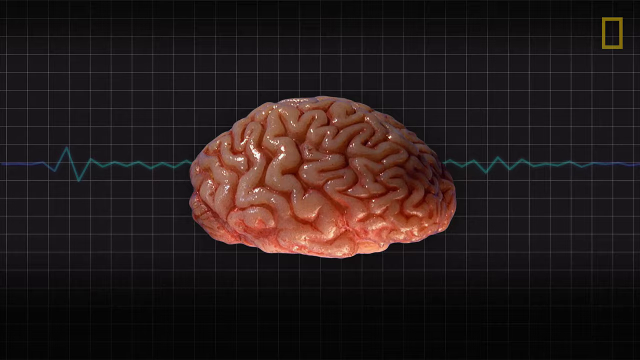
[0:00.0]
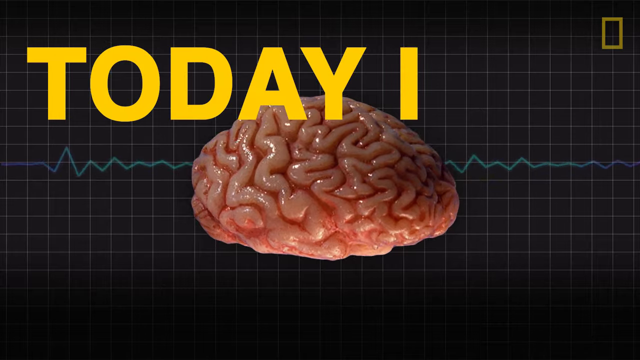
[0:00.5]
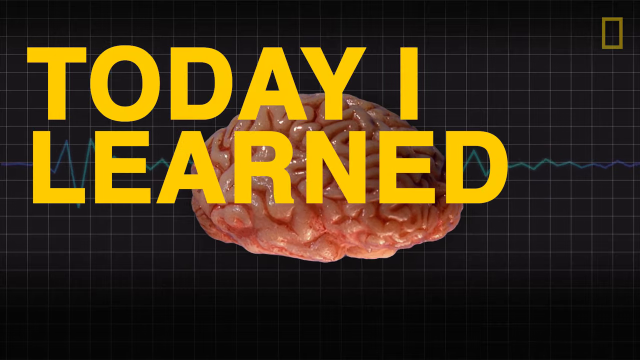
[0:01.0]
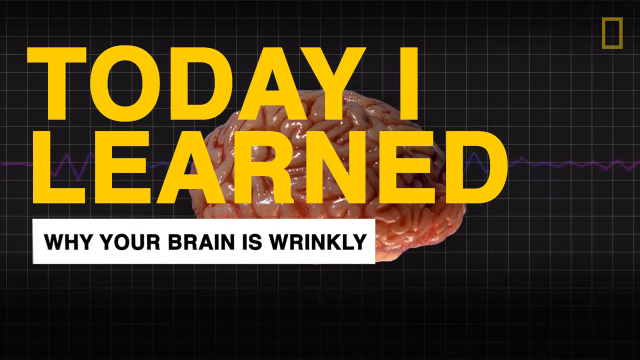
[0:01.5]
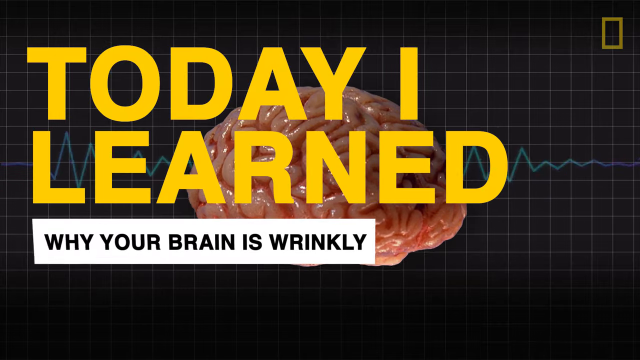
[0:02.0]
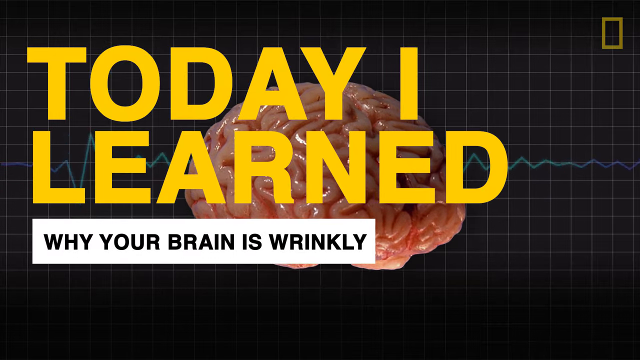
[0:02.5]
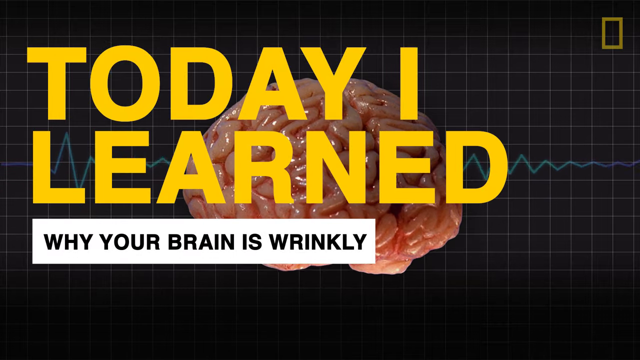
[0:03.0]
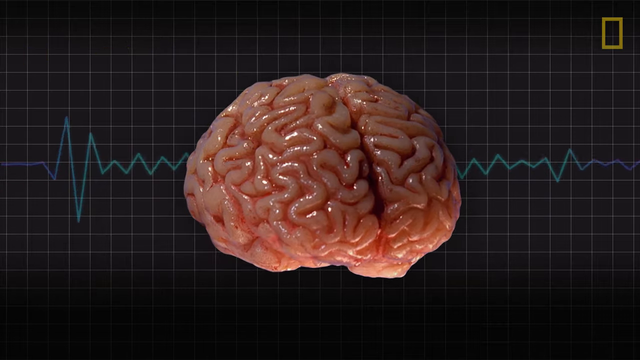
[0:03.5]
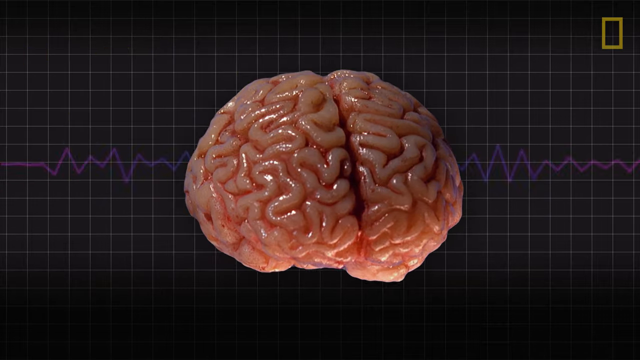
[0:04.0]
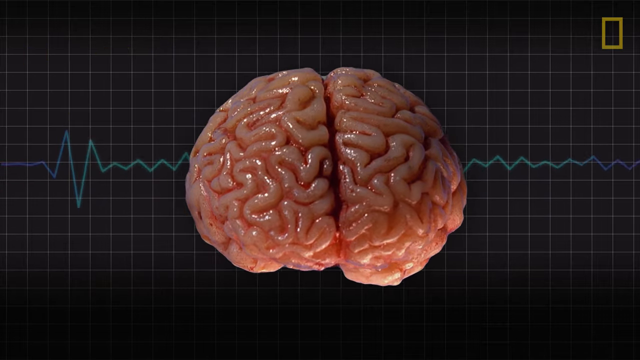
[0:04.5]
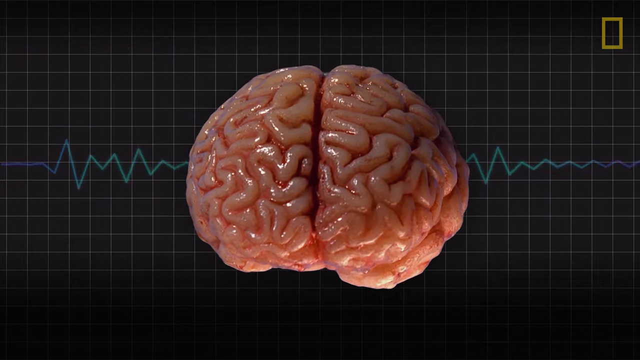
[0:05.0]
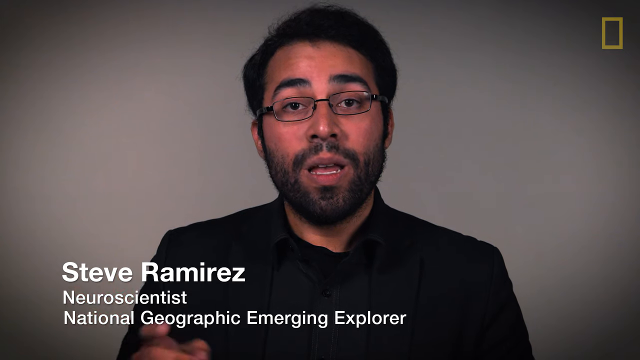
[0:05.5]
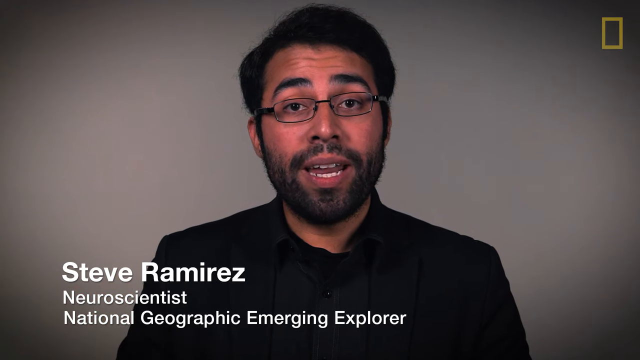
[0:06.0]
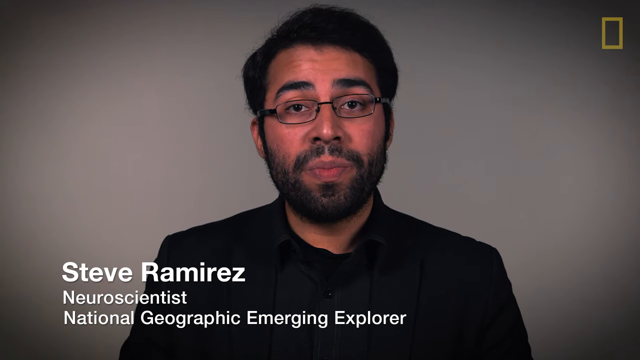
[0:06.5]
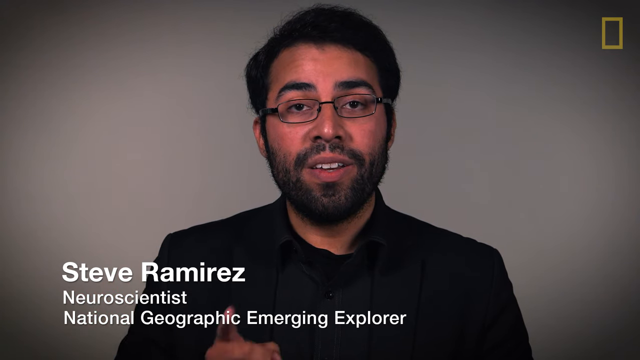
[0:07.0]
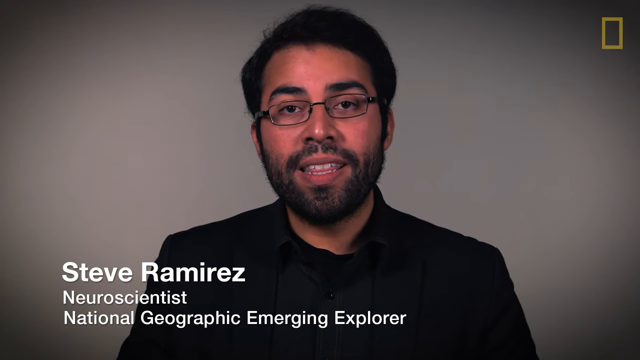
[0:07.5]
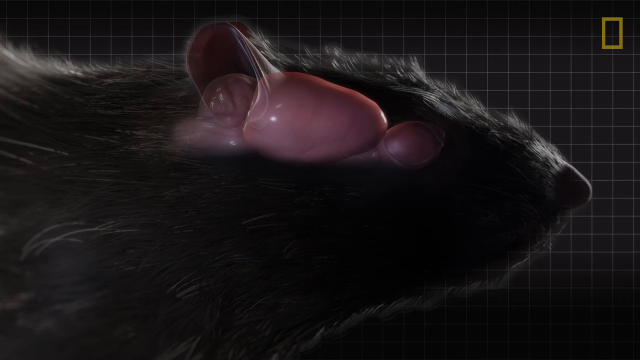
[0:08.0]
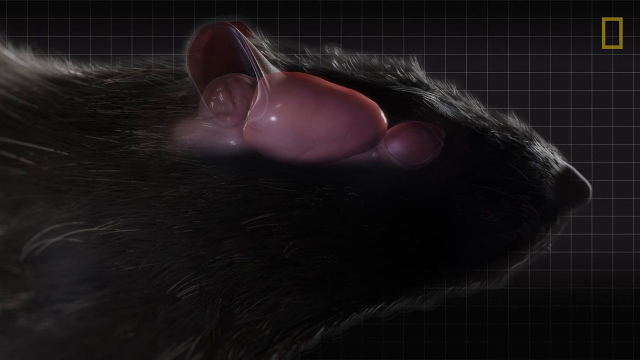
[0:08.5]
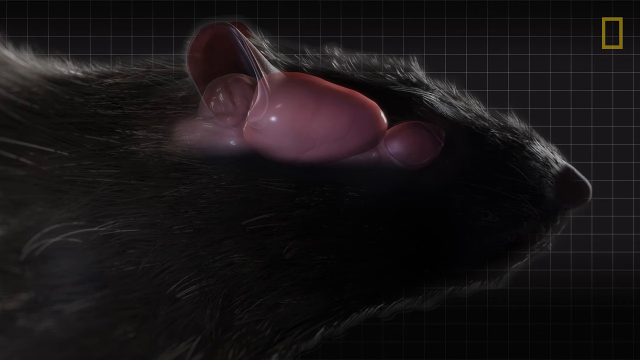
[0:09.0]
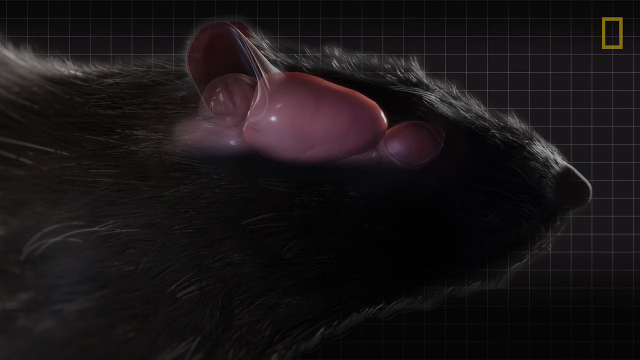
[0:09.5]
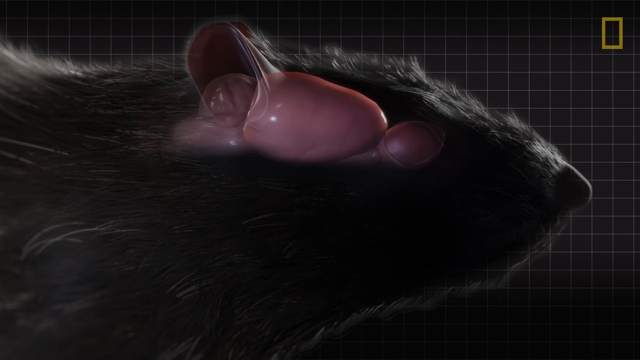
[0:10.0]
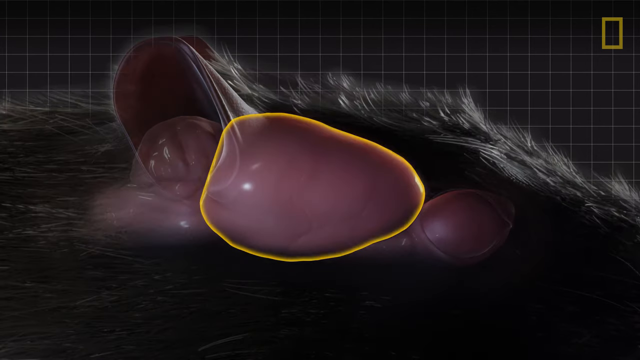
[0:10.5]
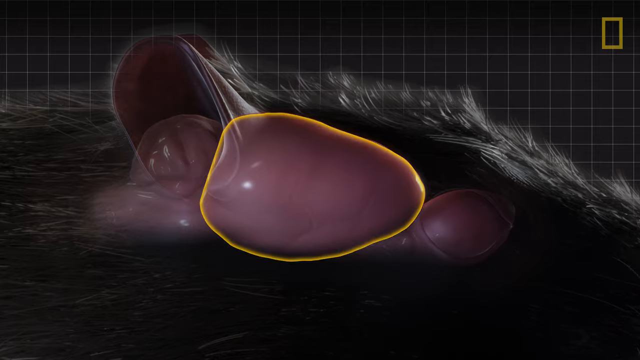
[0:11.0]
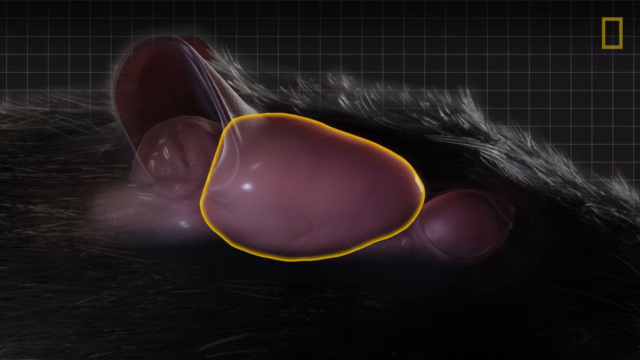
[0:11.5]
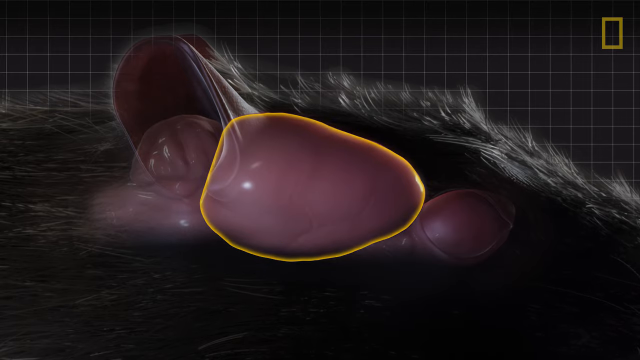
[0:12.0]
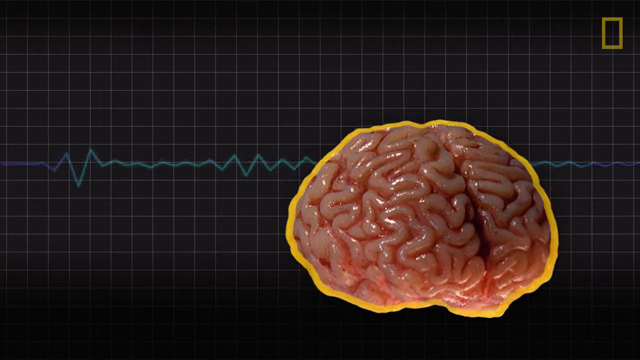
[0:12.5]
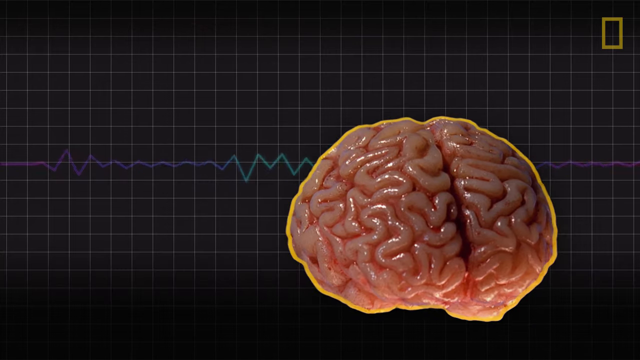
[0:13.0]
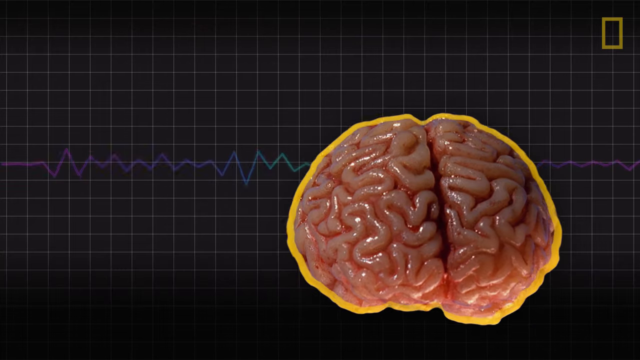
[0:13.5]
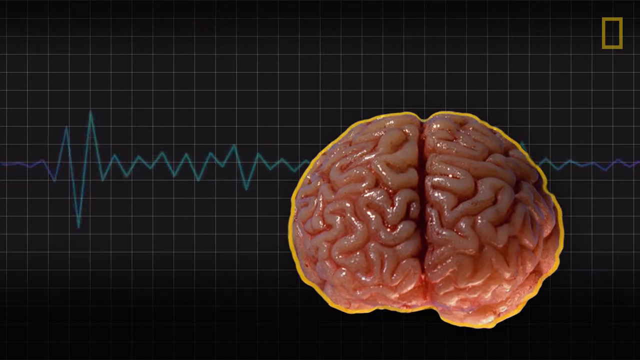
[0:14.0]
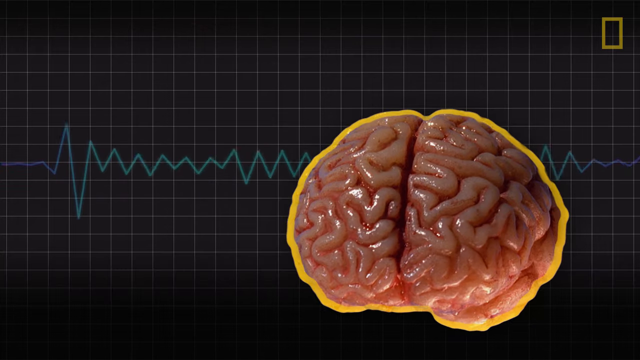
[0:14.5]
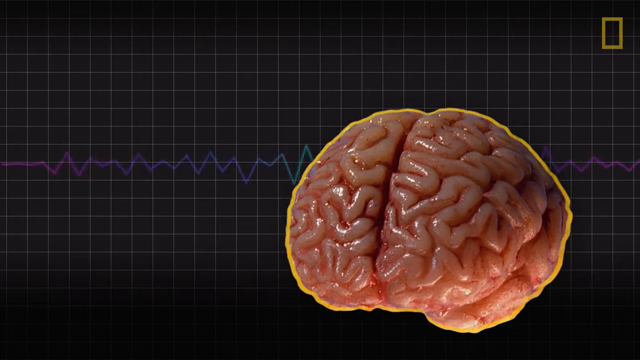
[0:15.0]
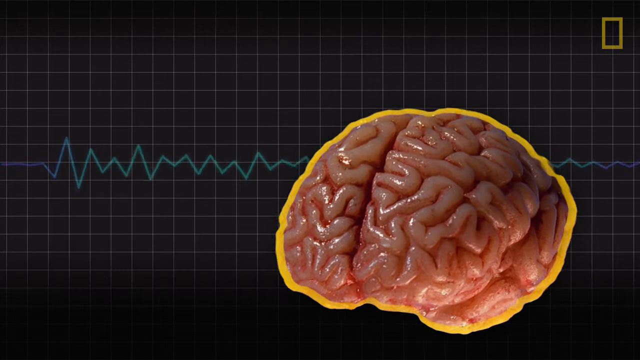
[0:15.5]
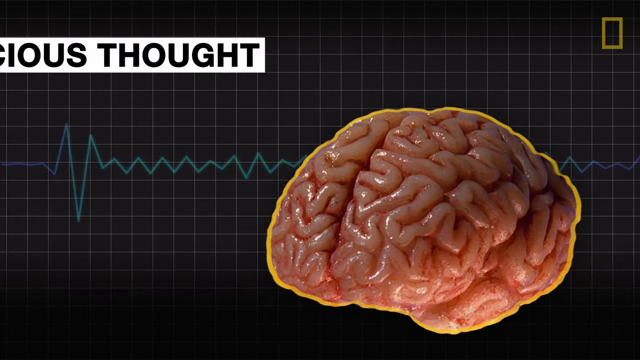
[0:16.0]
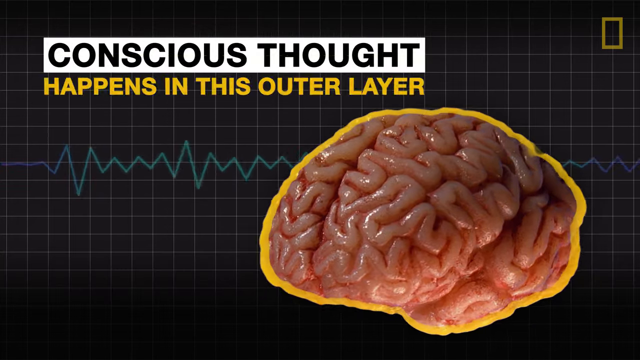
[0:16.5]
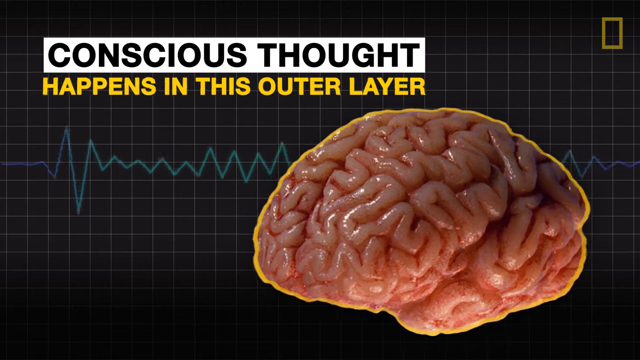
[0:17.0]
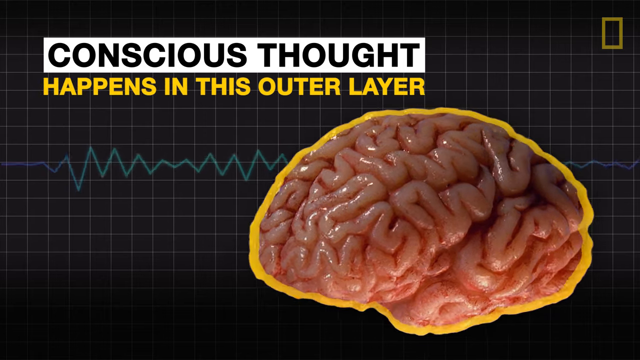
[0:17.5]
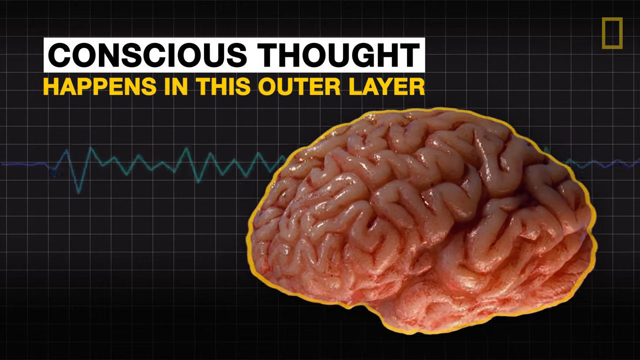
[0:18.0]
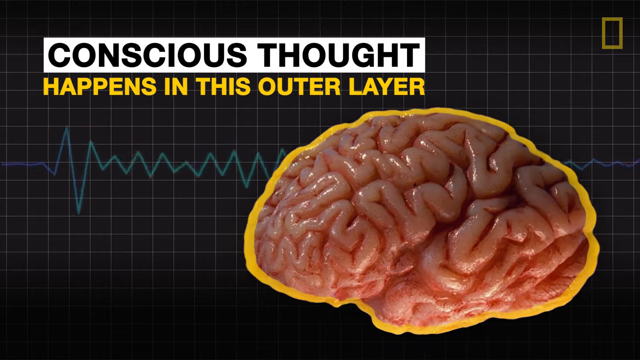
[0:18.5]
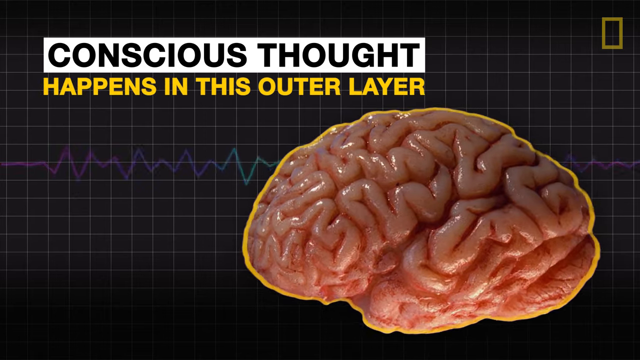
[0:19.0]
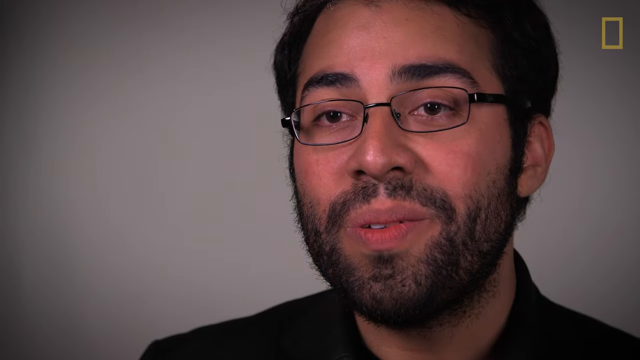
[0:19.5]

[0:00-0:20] On a black background, a very shiny, slimy-looking brain rotates. Over it, large yellow all-caps sans-serif text reads "today I learned," and beneath that a white text box with black all-caps text says "why your brain is wrinkly." In the background there is a kind of gray grid pattern with a small blue, kind of heartbeat-style line moving up and down. After this brief opening, the video switches to a man talking to the viewer against a gray background. He wears glasses and a black button-down shirt, has dark or black hair, a black beard and a black mustache, and is probably in his 30s. In the lower left, white text identifies him as "Steve Ramirez," with smaller text below reading "neuroscientist" and a next line reading "national geographic emerging explorer." The video then cuts to a side view of a furry rat in heavy shadow on the same grid background, focusing on the rat's brain: a yellow circle by its ear surrounds an exposed brain, and the yellow outline is kind of radiating. The video then returns to the rotating human brain with the opening graphic, but the text is different: a white text box in the upper left reads "conscious thought" in black caps, and beneath it, outside the box, yellow all-caps text appears reading "happens in this outer layer."